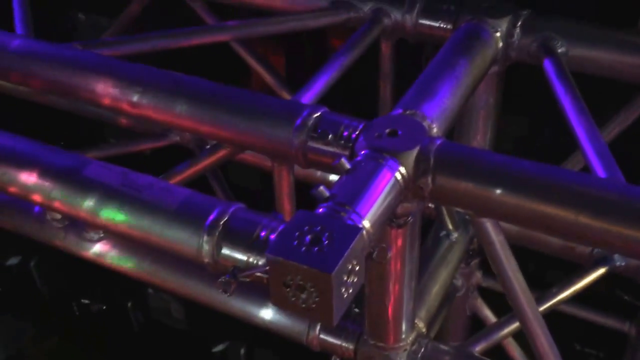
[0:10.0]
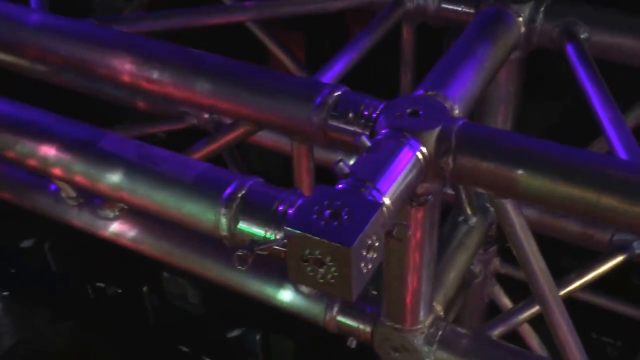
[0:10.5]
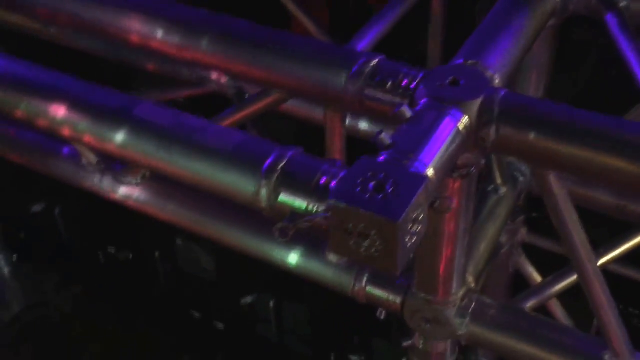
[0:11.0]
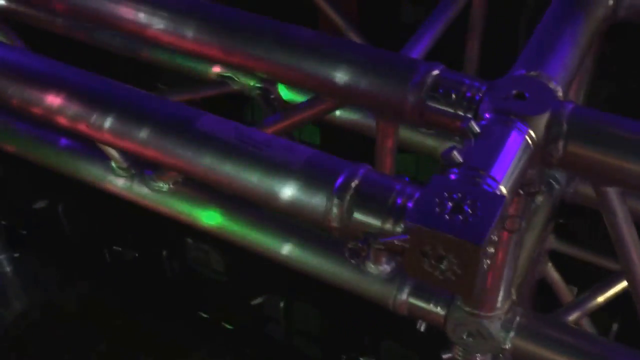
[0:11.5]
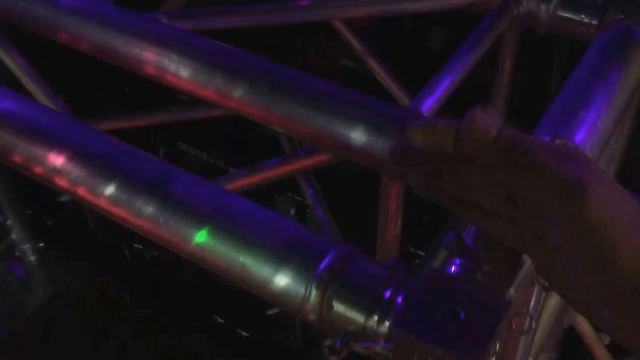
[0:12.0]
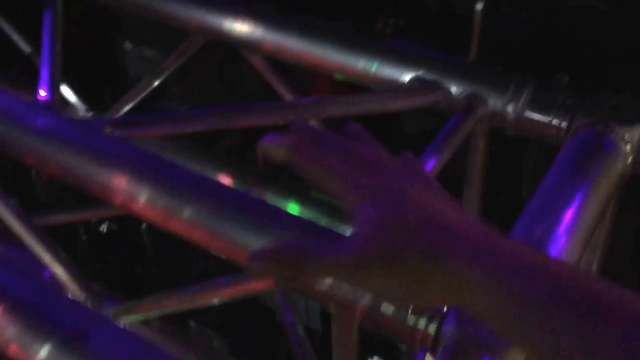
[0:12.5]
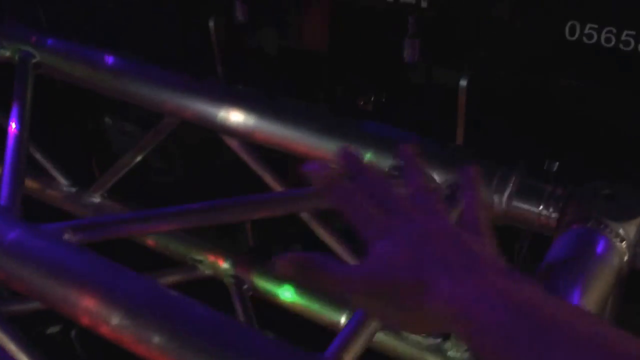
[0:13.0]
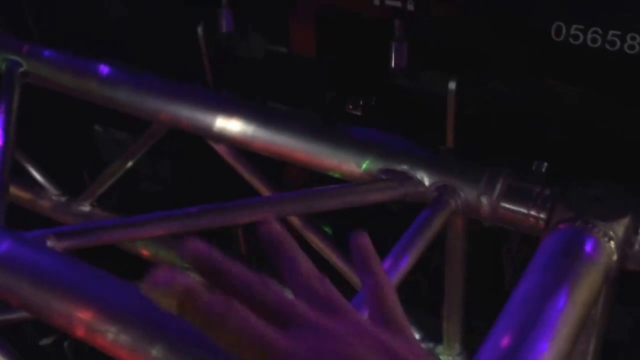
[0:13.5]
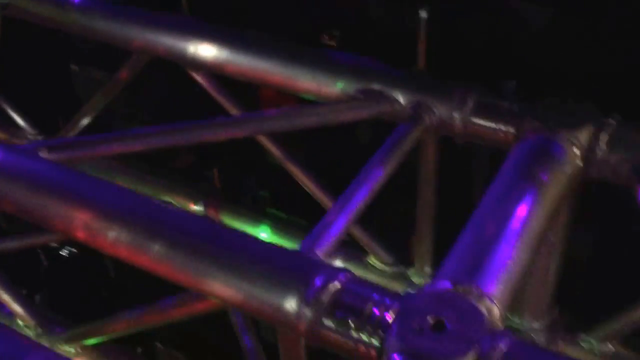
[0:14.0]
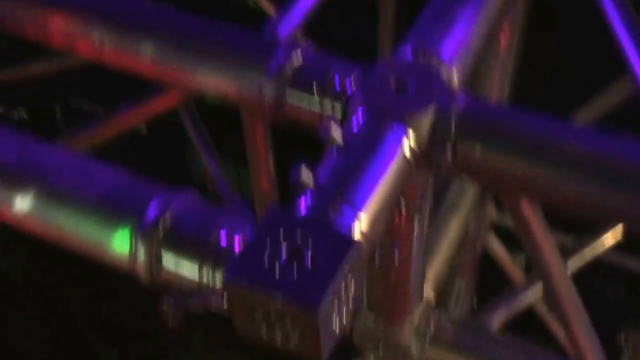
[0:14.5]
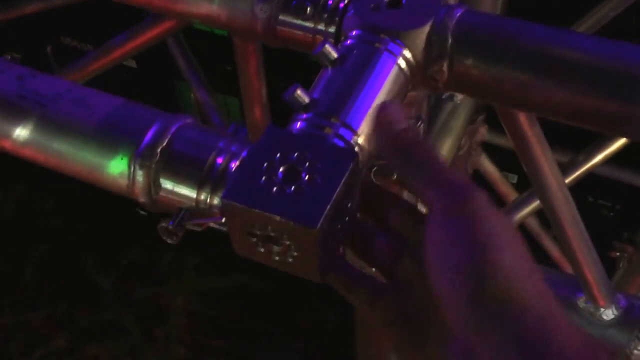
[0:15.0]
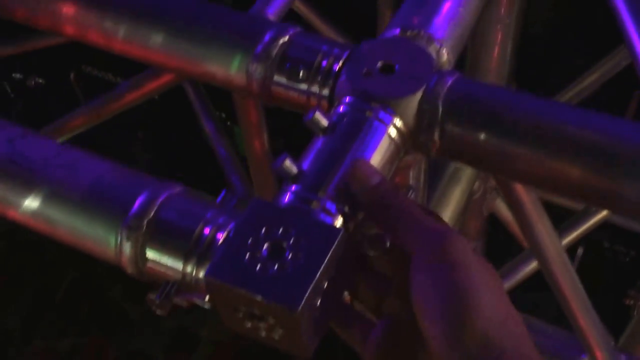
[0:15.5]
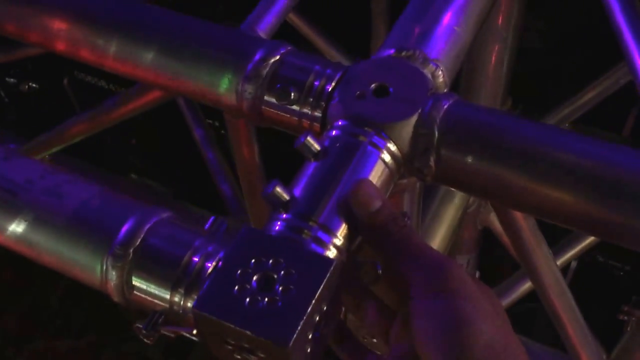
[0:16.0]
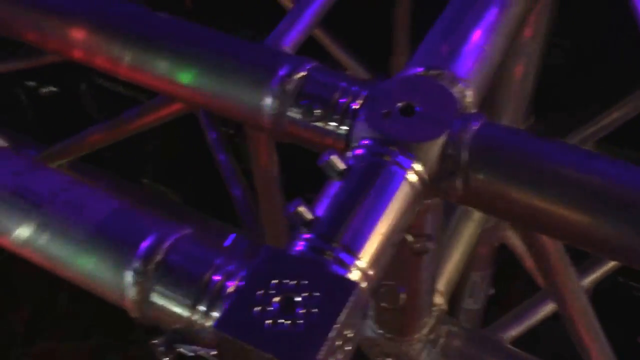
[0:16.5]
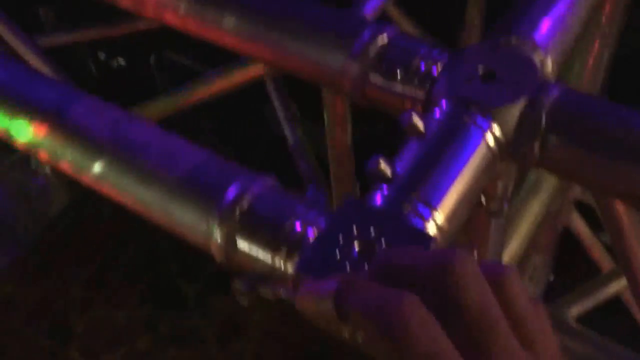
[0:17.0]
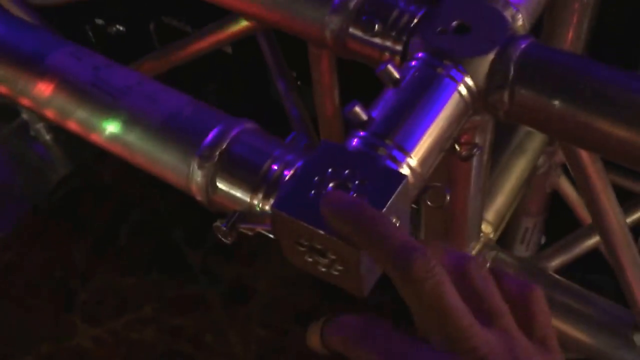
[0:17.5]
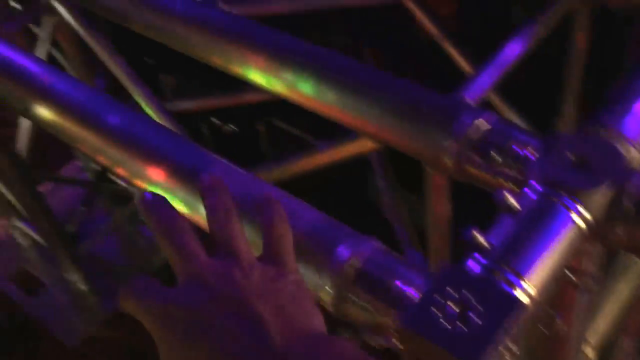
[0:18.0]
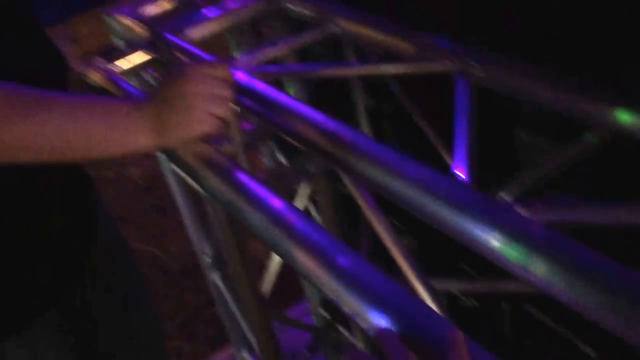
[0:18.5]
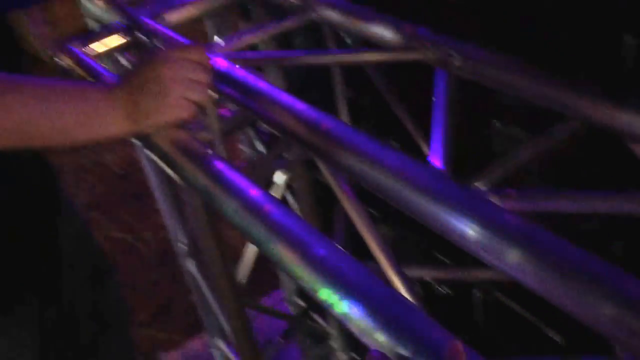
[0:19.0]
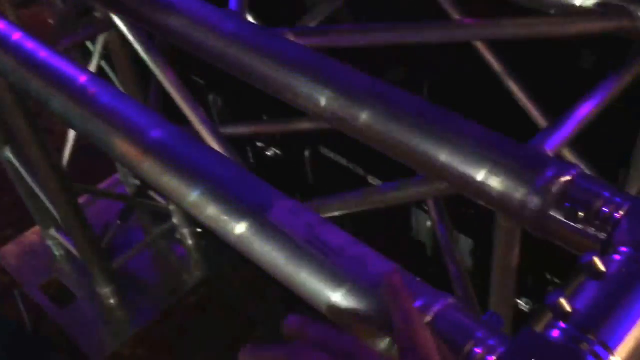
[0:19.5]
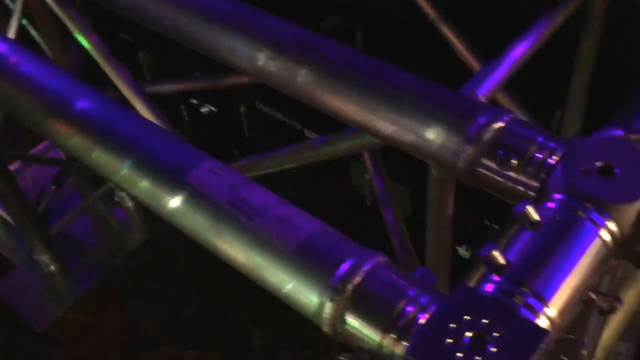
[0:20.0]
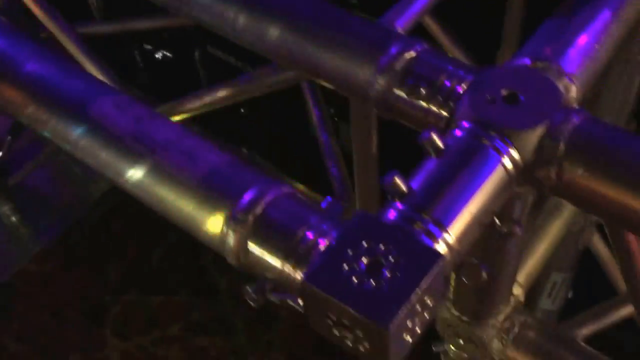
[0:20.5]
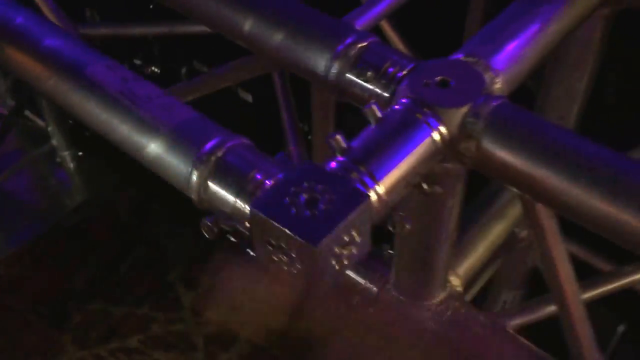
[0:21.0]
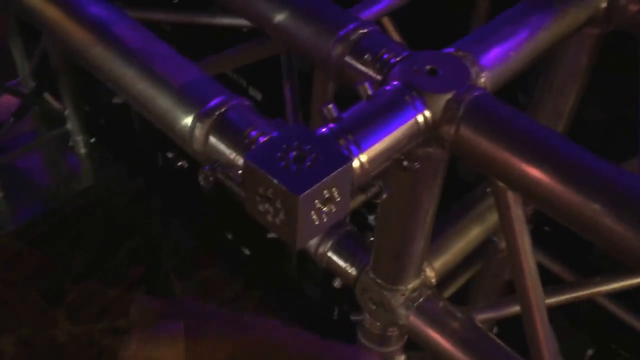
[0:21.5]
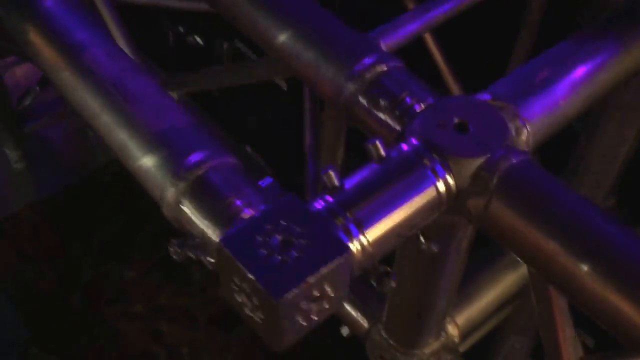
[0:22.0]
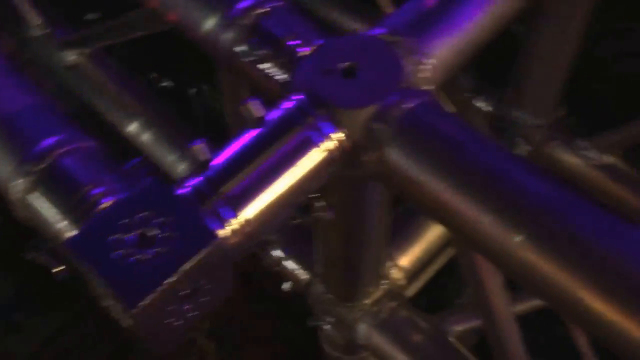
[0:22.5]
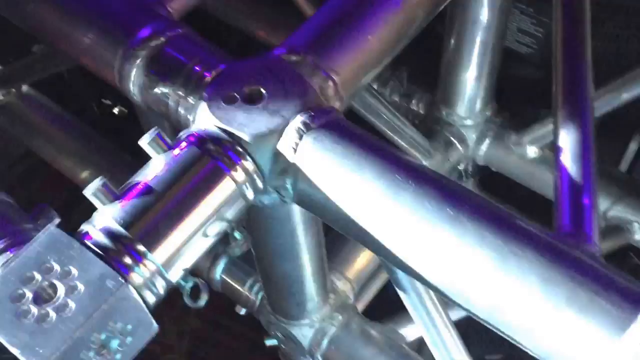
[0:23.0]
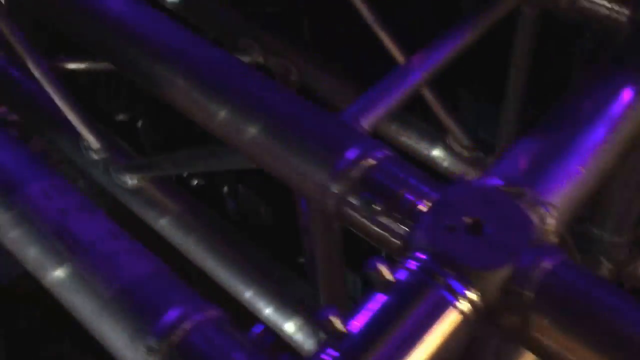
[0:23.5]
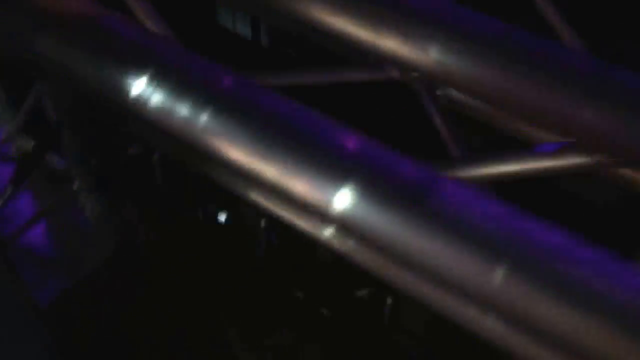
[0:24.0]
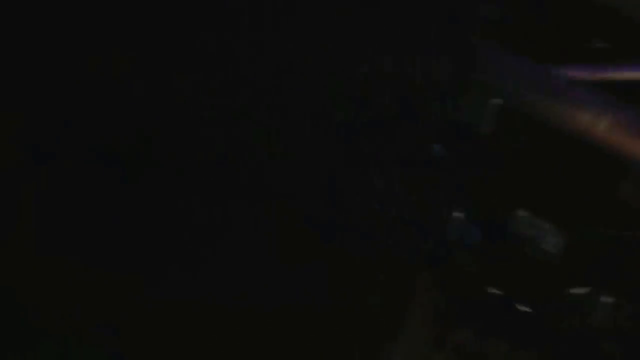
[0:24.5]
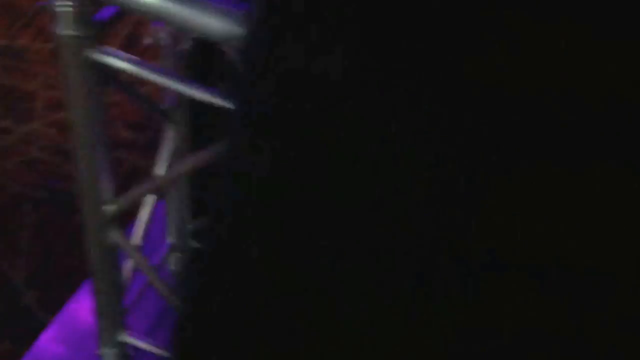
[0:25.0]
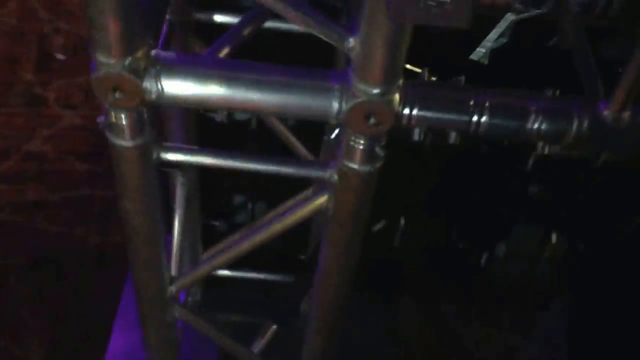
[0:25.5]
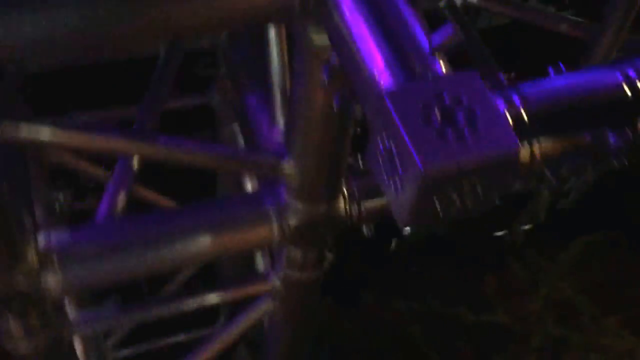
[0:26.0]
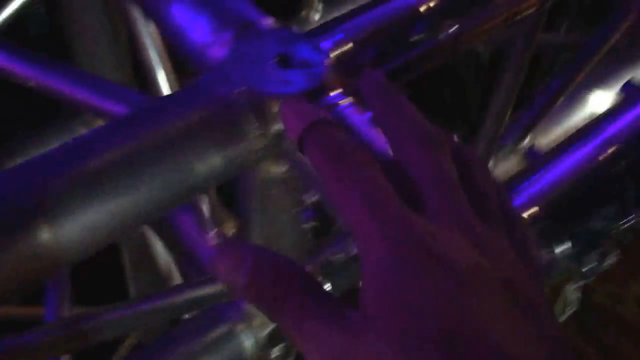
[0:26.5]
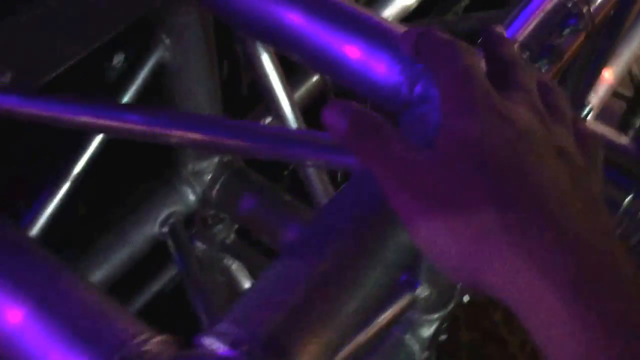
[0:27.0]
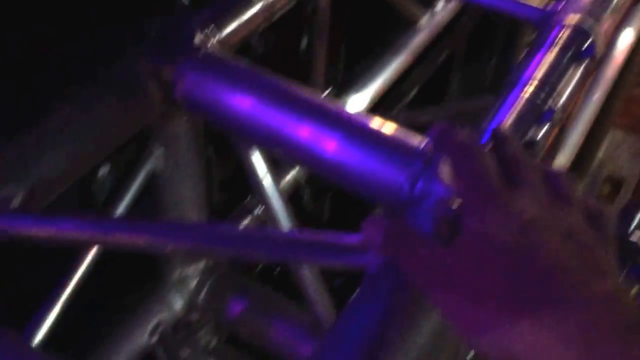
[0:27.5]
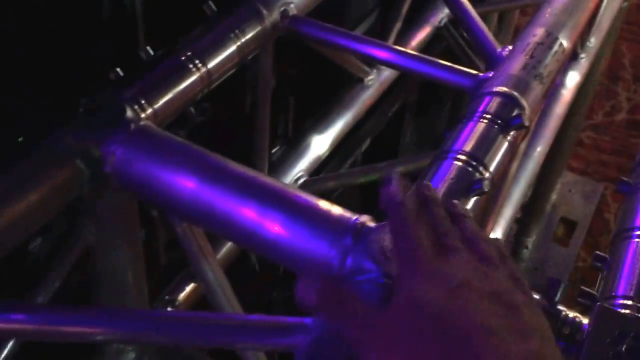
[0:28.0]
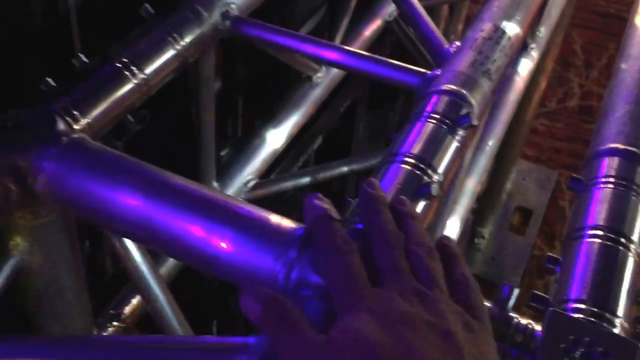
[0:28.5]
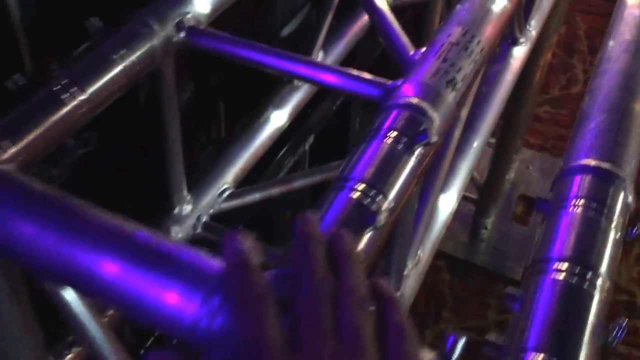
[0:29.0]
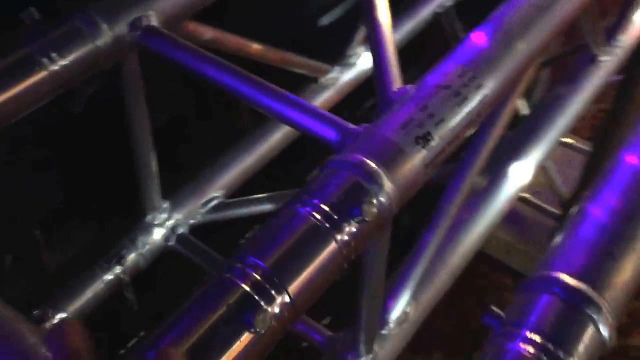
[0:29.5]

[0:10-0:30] A close-up shows some type of metal structure. A person's hand touches various parts of the frame, but the person is not seen. There may be another person there: as the camera pans across the frame, a flash of someone's black shirt appears, going a little across their torso without showing the neck. The metal frame looks a bit like the frames on concert stages that hold the lights. Purple, yellow and maybe white strobe lights kind of illuminate the frame as the camera pans back and forth. One person is kind of pointing to different parts of it, as if talking about a product or talking to the person who appears to be standing next to them. The camera pans from one end to the other, kind of walks around the pair, and then goes back to the end, where the video stops.